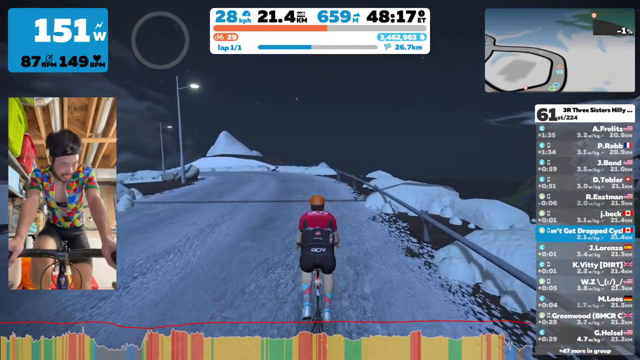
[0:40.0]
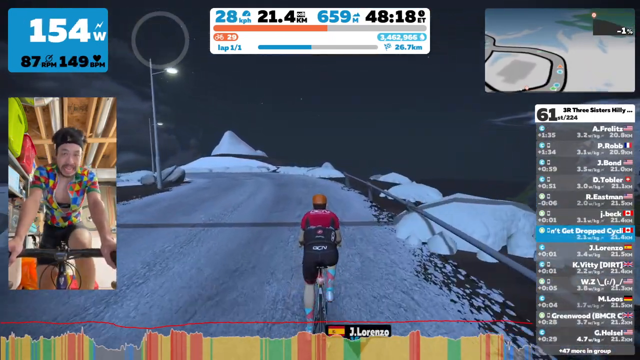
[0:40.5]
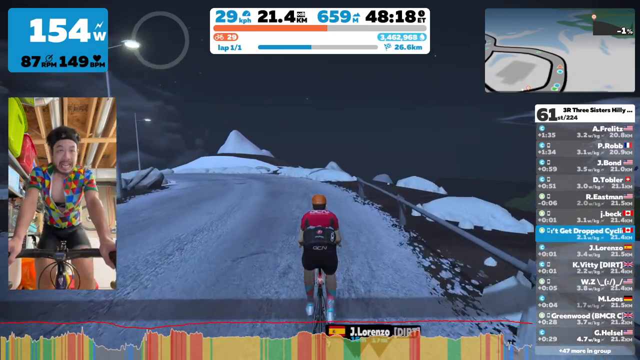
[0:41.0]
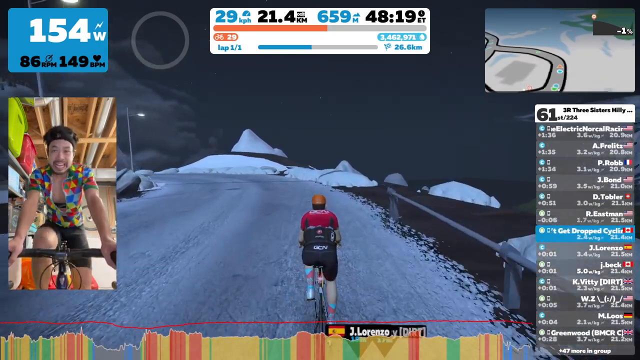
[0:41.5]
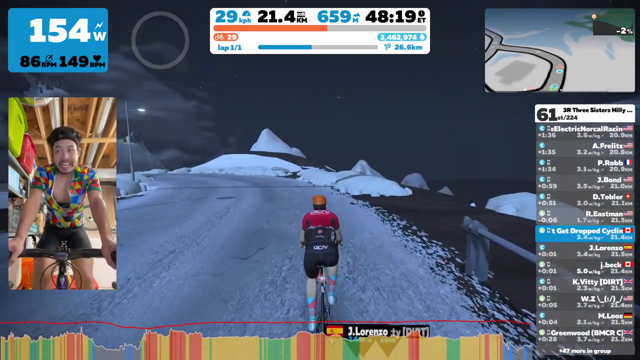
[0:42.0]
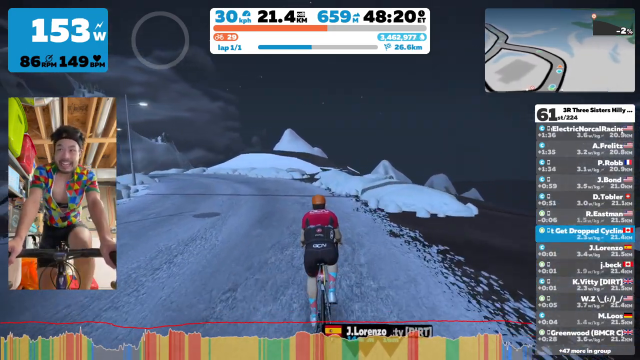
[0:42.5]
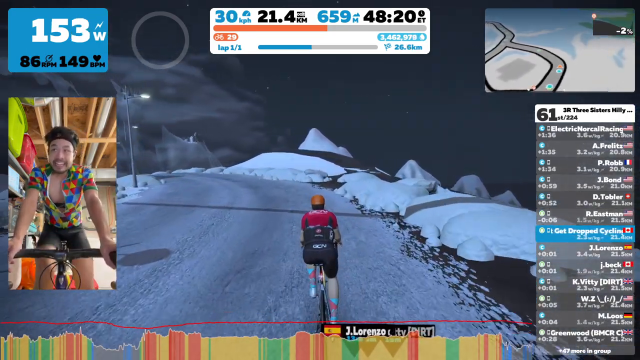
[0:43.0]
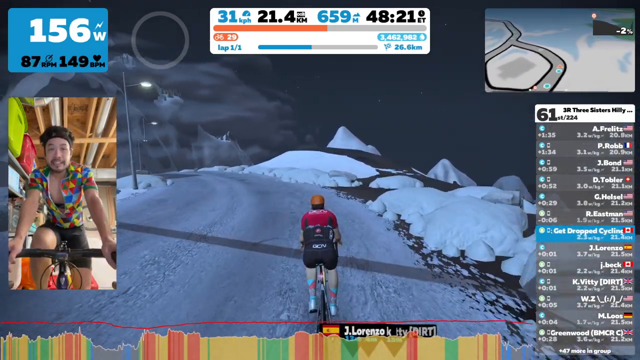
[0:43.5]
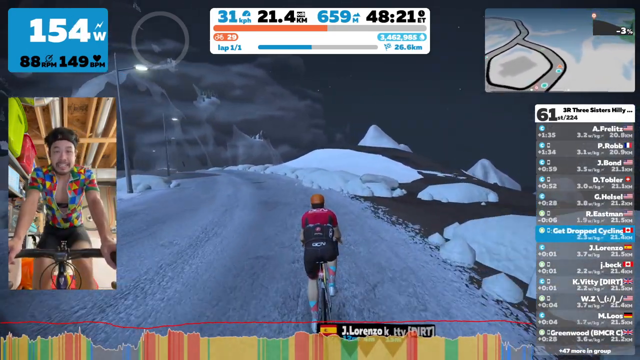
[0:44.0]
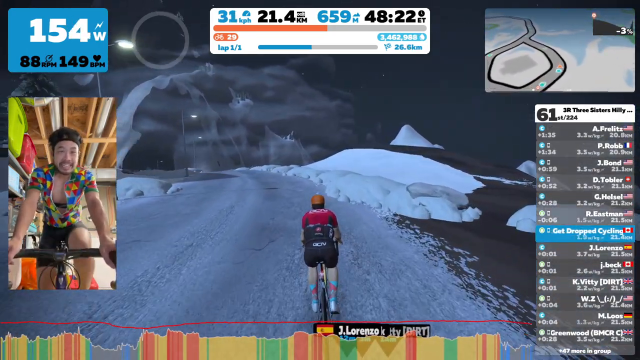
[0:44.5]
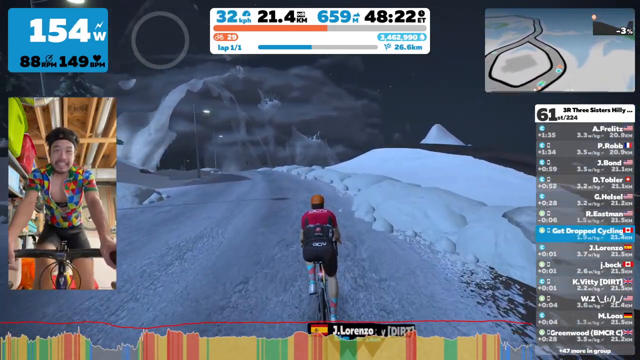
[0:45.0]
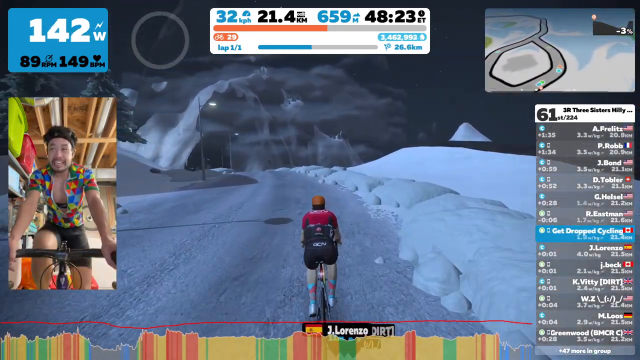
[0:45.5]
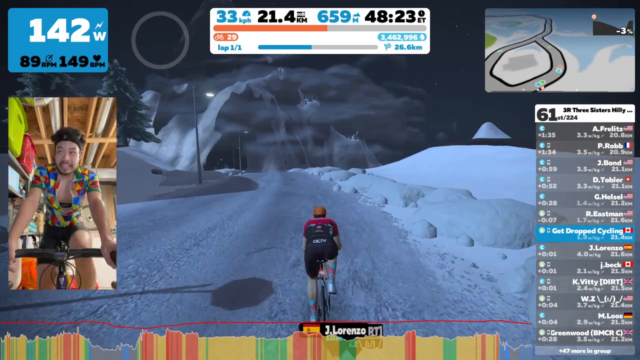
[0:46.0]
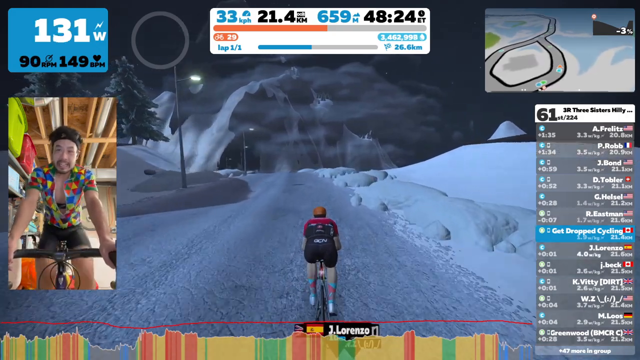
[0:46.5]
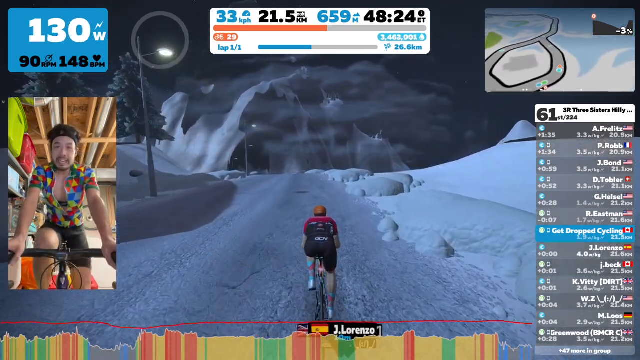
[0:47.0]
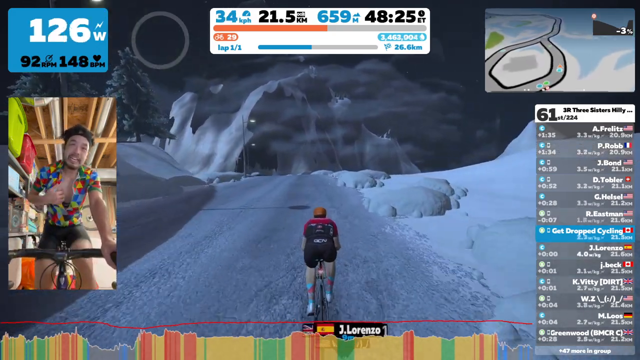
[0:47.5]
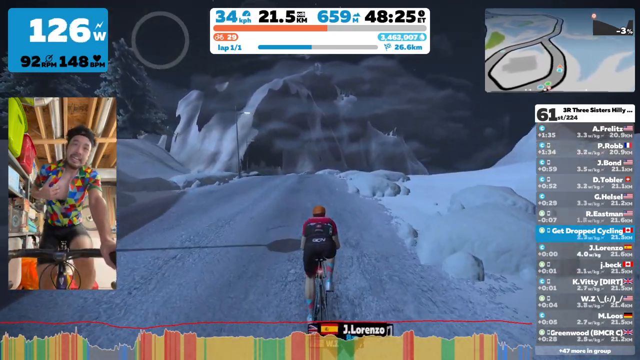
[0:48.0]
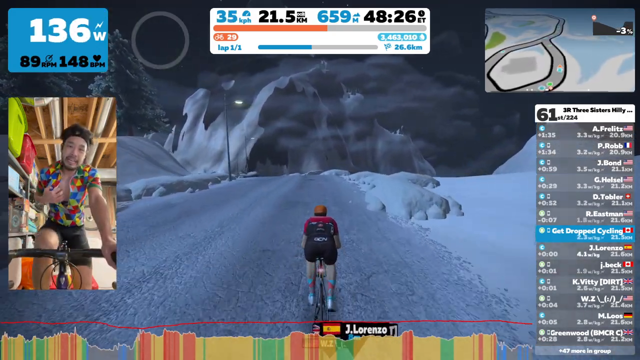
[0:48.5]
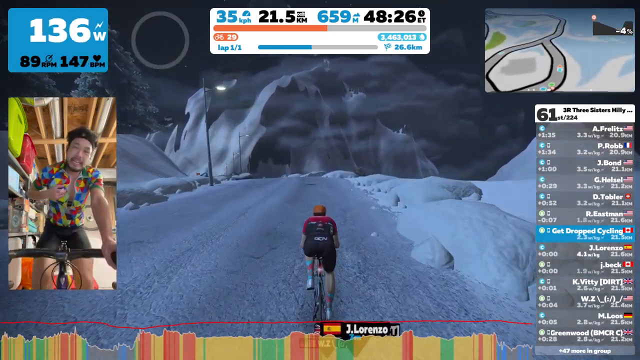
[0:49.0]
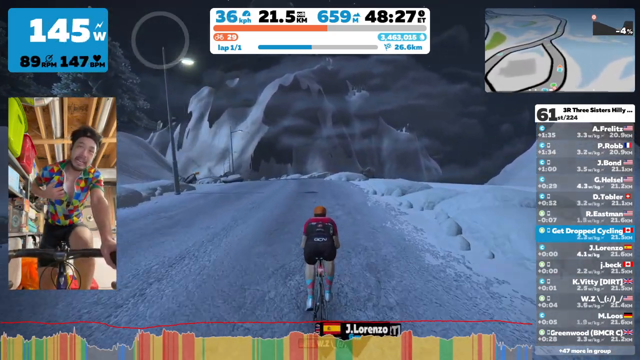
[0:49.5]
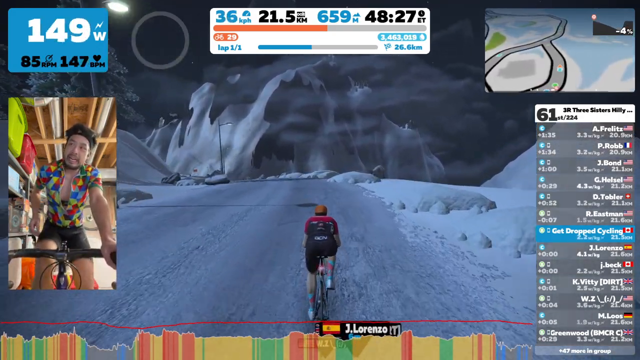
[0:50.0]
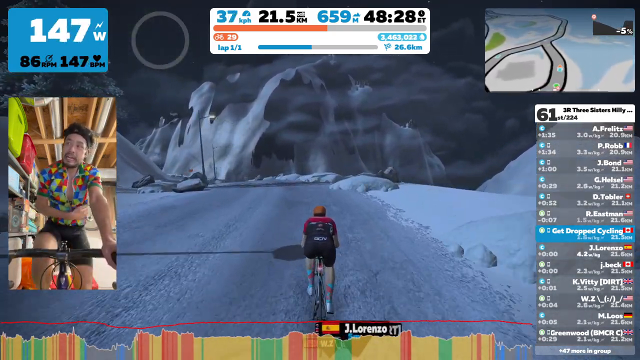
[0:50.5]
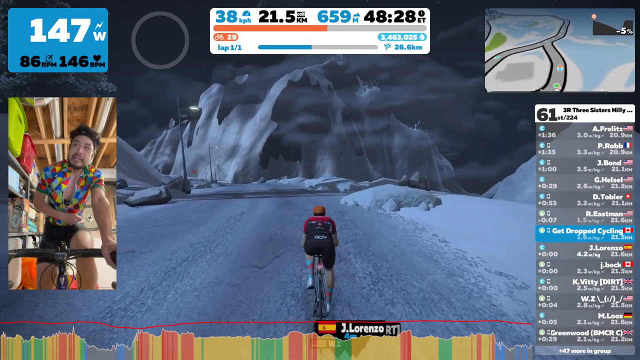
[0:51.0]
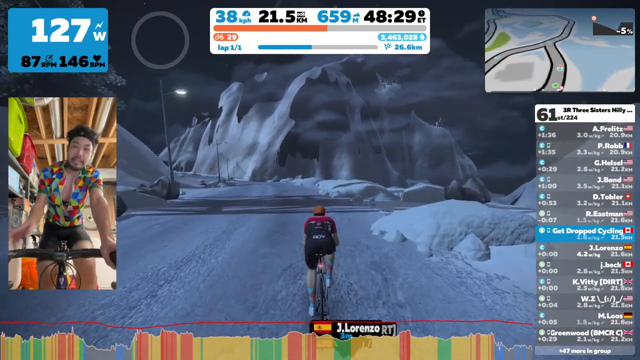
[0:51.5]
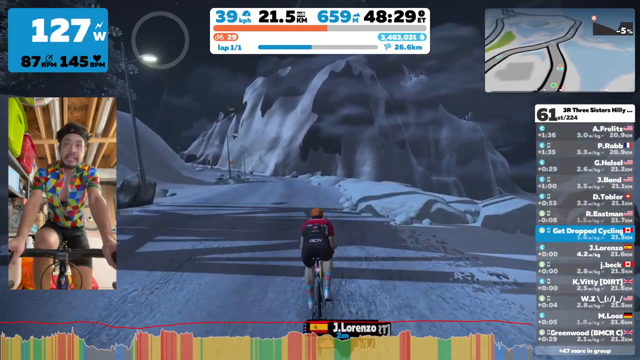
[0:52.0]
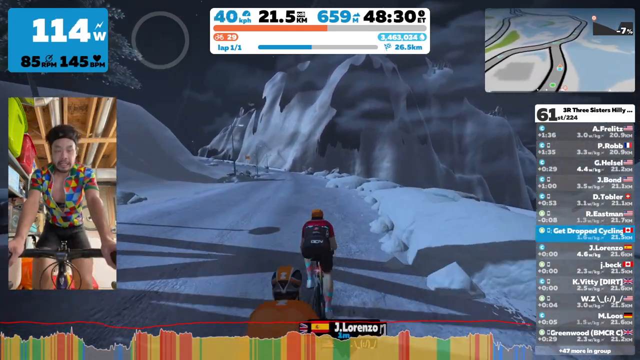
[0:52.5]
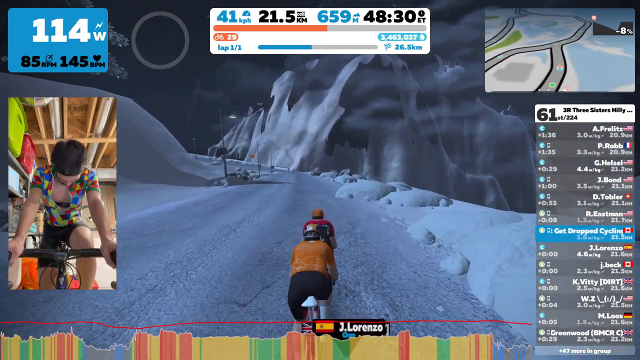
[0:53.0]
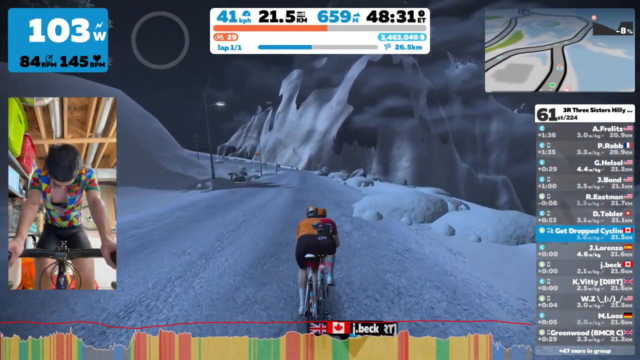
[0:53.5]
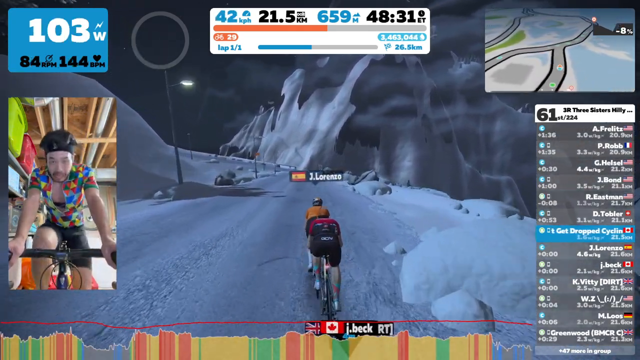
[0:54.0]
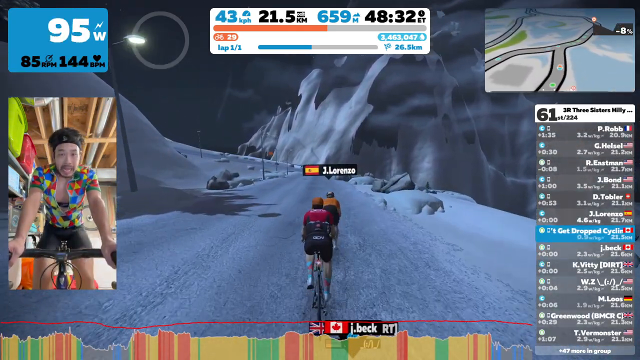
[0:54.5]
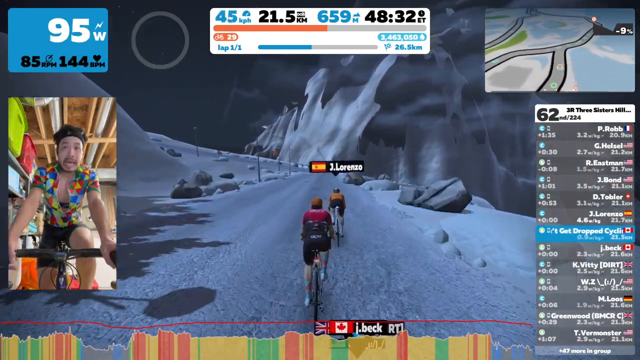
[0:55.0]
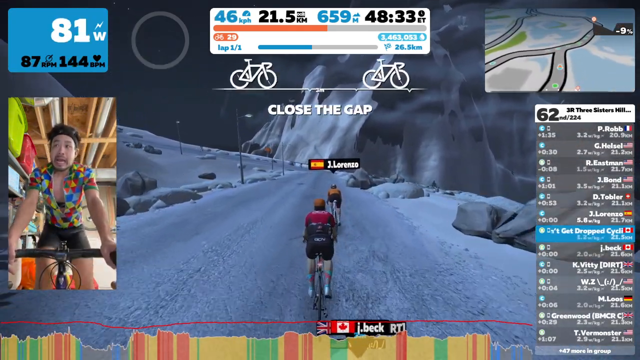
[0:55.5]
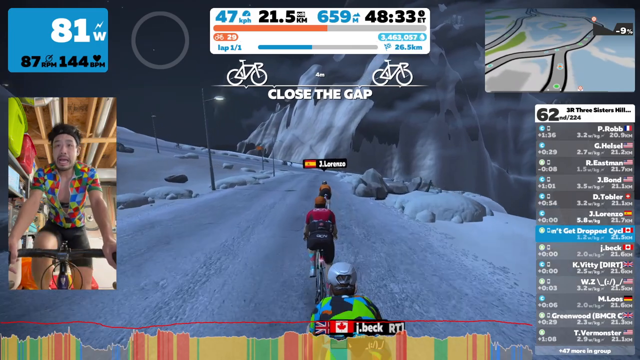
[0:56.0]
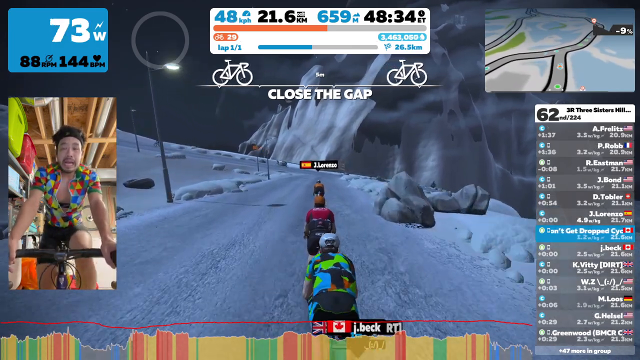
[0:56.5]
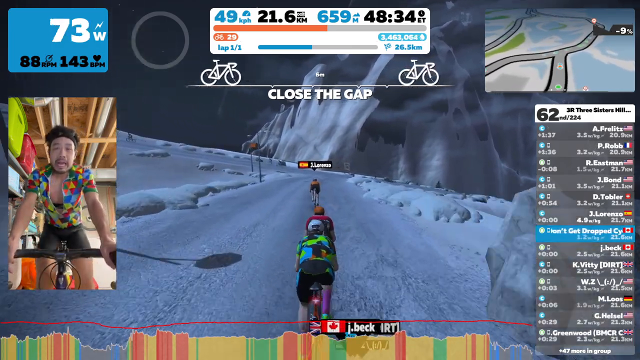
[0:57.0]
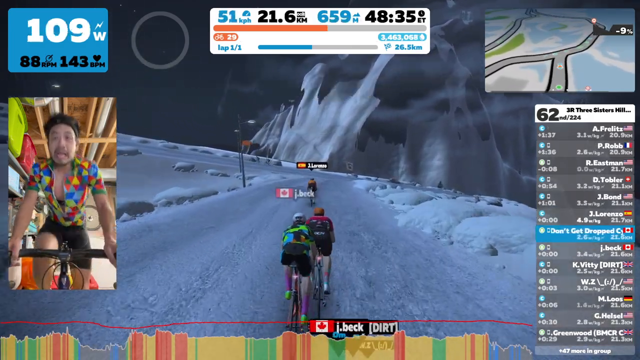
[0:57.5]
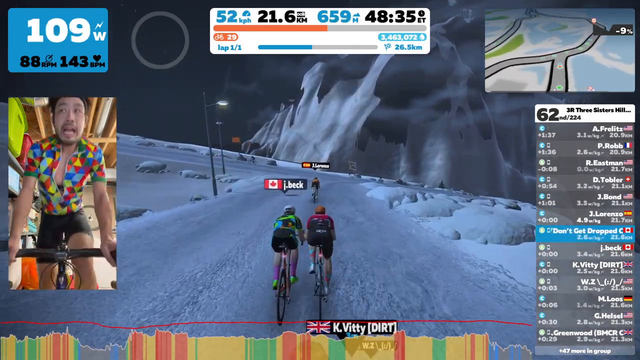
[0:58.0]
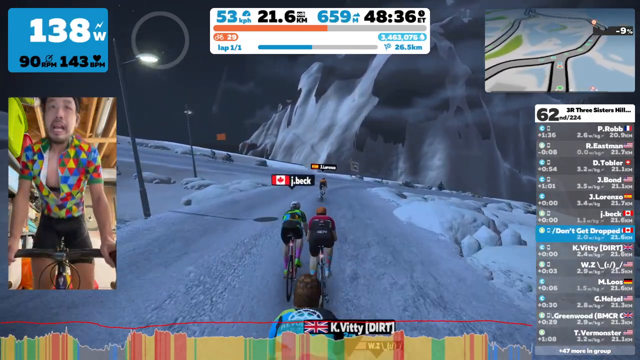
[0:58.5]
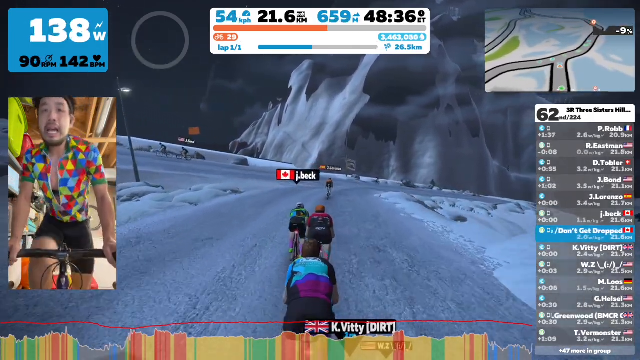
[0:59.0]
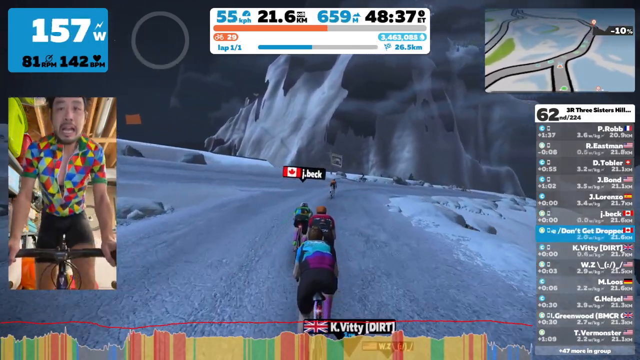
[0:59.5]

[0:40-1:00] The player is on the left side of the screen, and the bicyclist in the game takes up most of the screen. As the bicyclist pedals on, the player seems to be getting a little tired; he has a kind of stressed look on his face, with his teeth showing. Behind him, the ceiling and a couple of bins on a shelf are visible. White text at the very bottom of the game screen apparently reads "Jay Lorenzo's". The bicyclist in the game hunches over a little. Someone seems to catch up to the player and then goes by him. The player's name is Jay Lorenzo, and he wears a worn shirt. A couple of bicyclists start to pass him. The player stands up and tries to pedal faster.